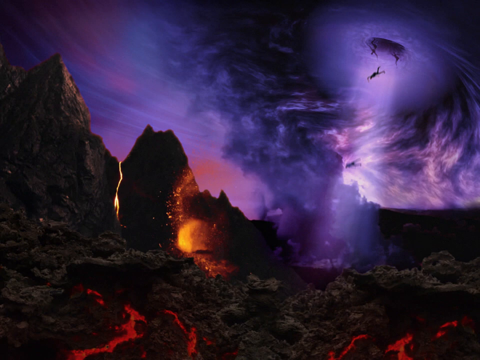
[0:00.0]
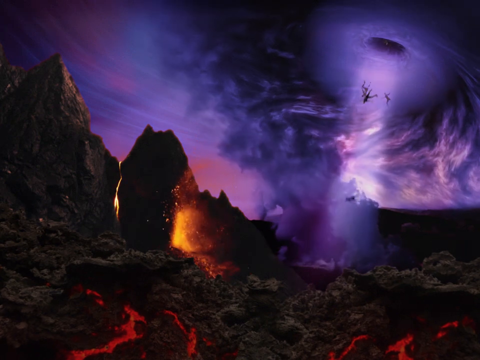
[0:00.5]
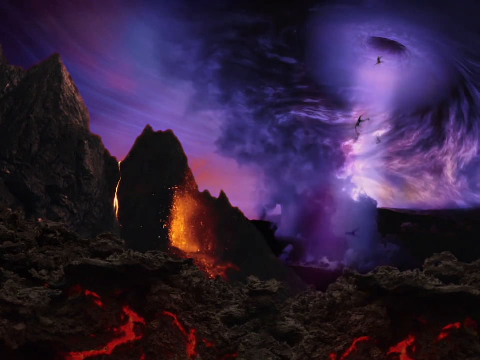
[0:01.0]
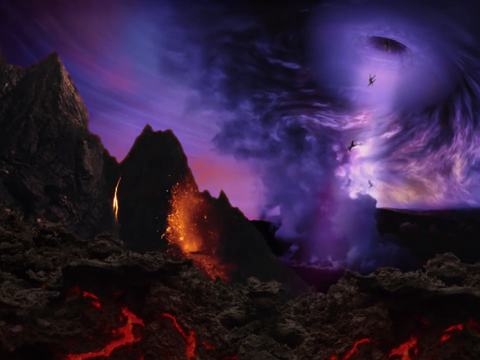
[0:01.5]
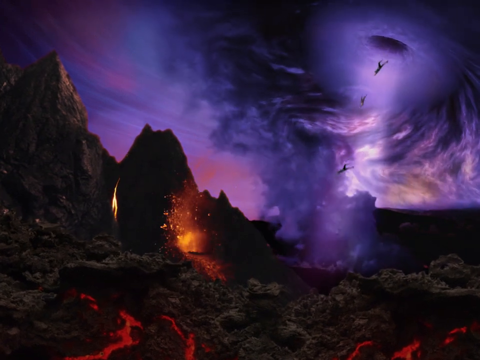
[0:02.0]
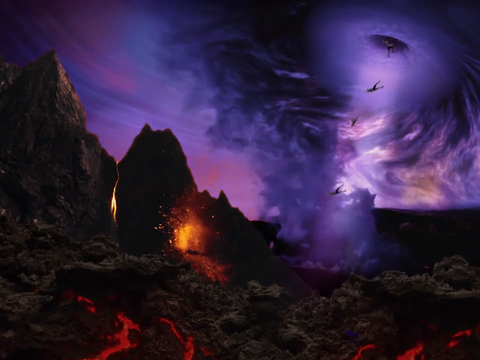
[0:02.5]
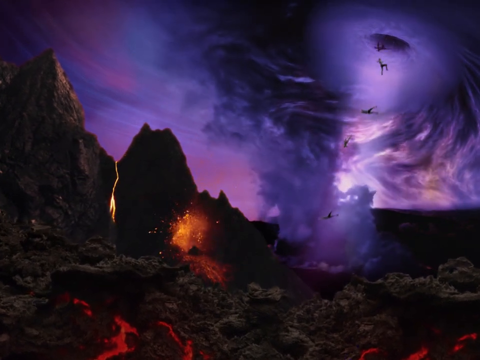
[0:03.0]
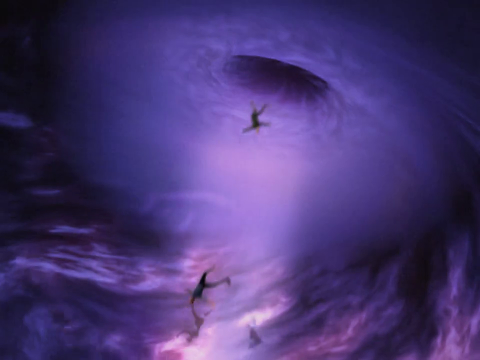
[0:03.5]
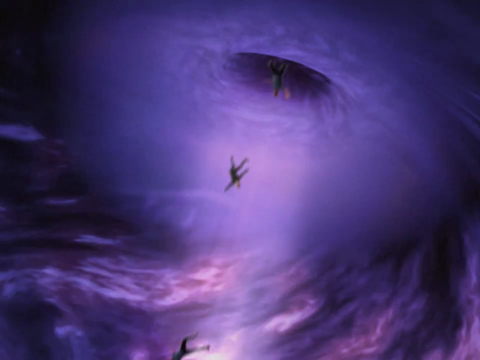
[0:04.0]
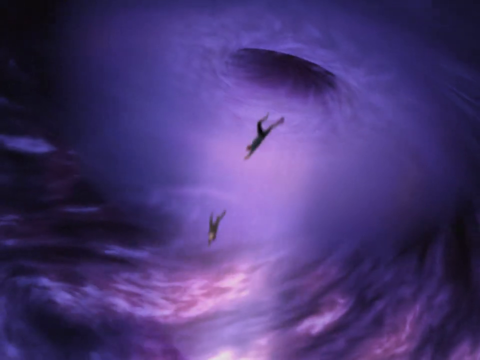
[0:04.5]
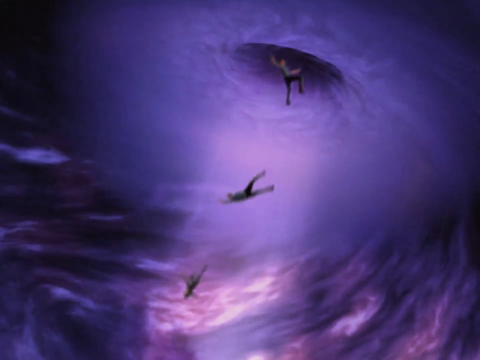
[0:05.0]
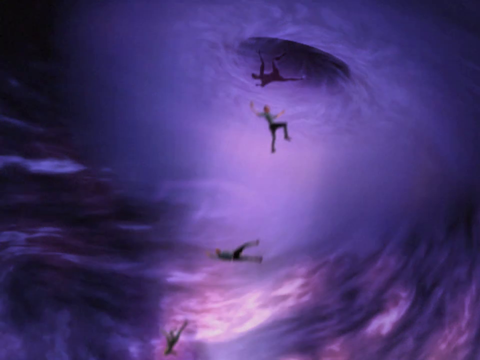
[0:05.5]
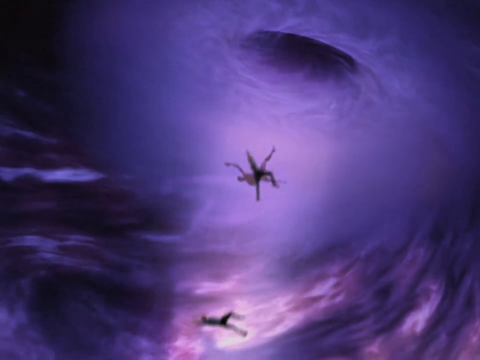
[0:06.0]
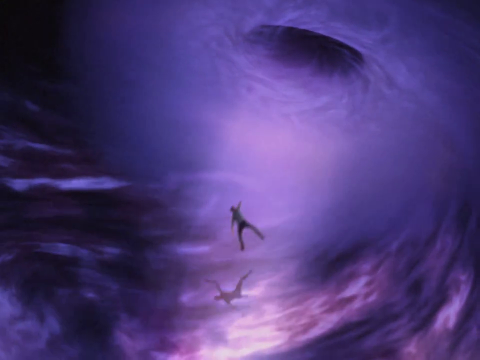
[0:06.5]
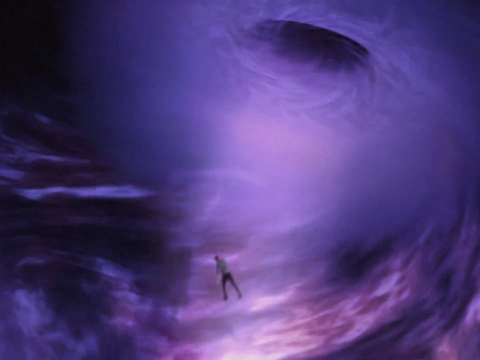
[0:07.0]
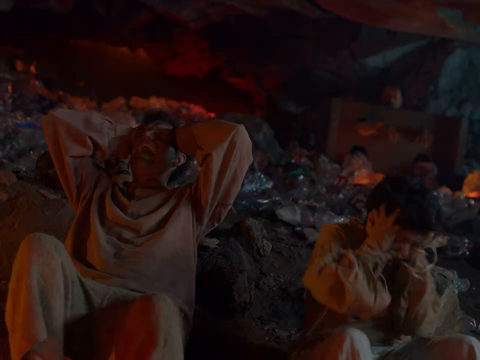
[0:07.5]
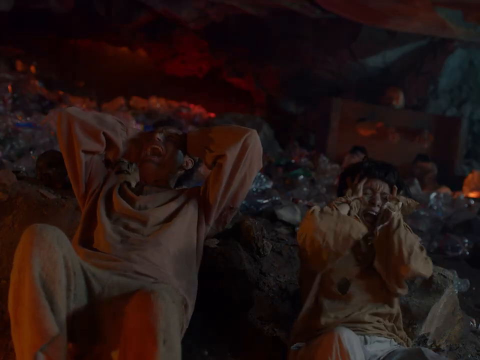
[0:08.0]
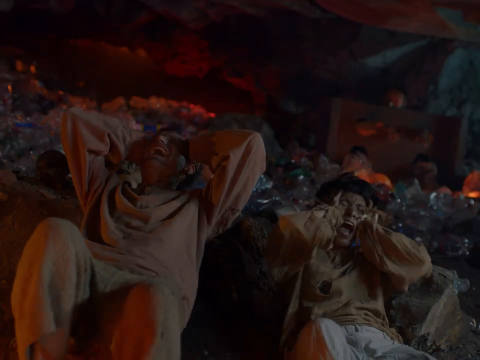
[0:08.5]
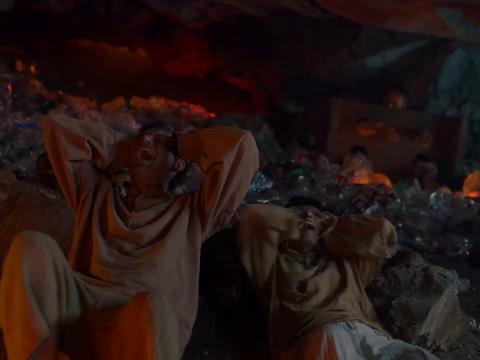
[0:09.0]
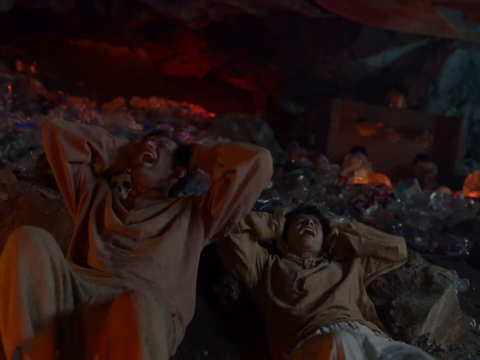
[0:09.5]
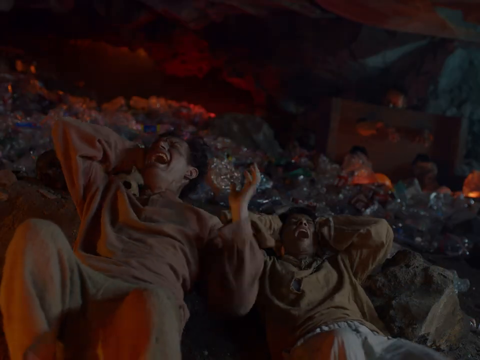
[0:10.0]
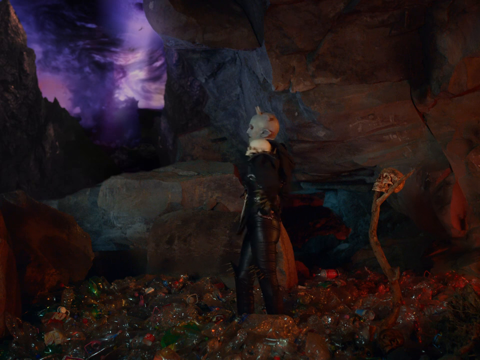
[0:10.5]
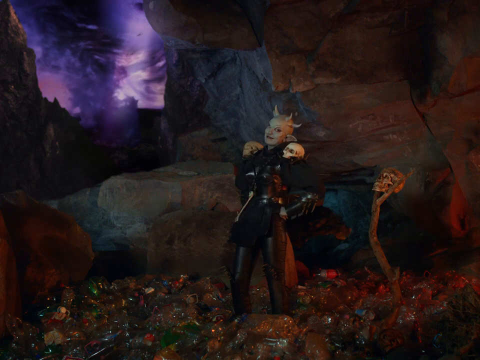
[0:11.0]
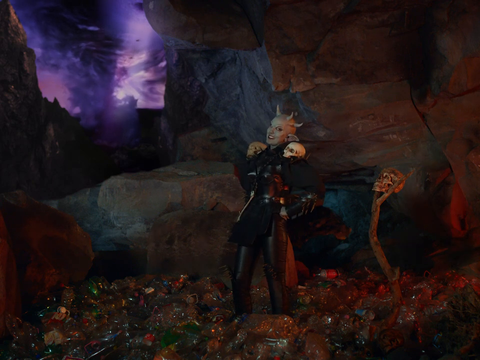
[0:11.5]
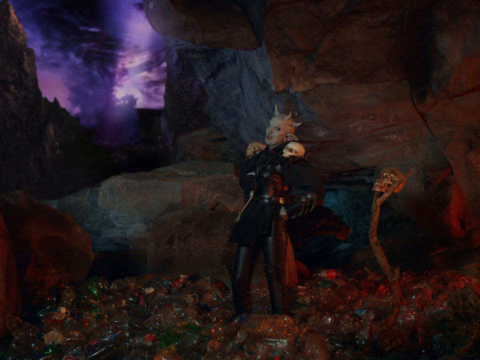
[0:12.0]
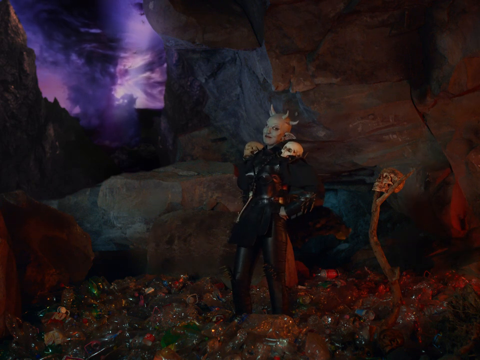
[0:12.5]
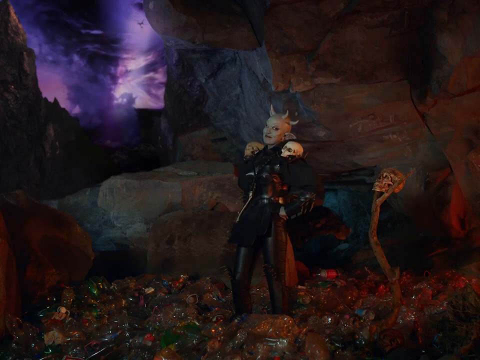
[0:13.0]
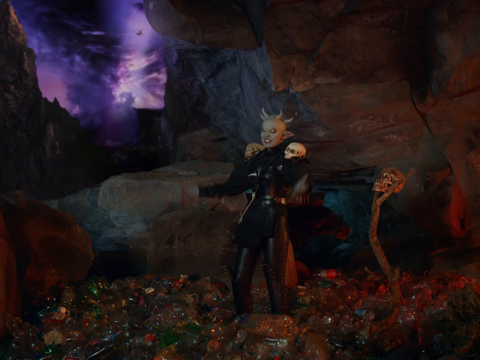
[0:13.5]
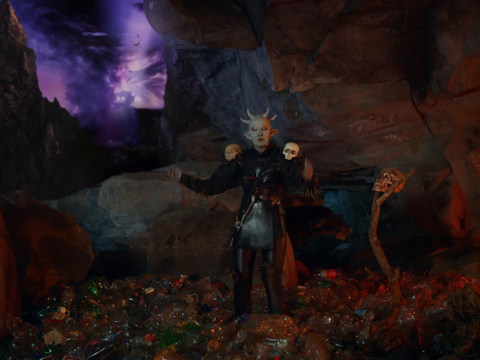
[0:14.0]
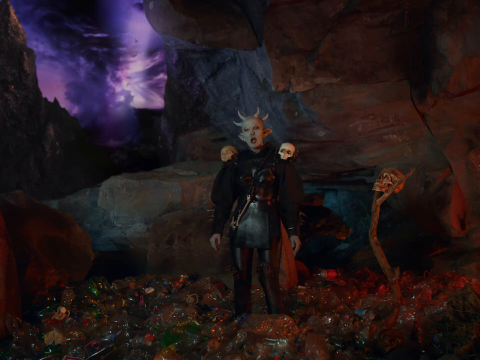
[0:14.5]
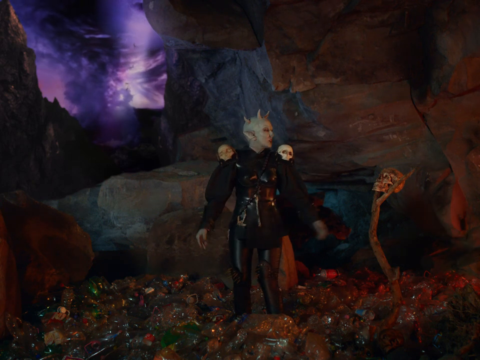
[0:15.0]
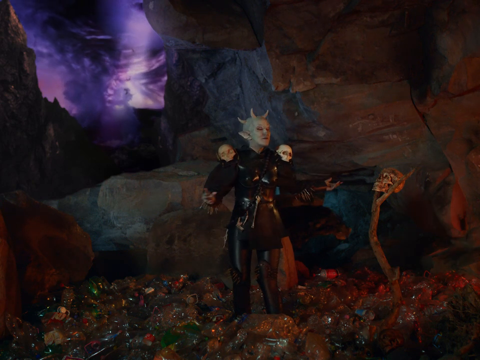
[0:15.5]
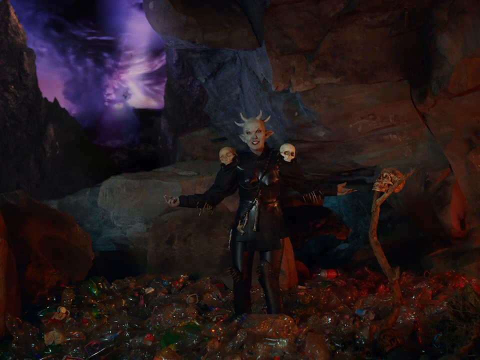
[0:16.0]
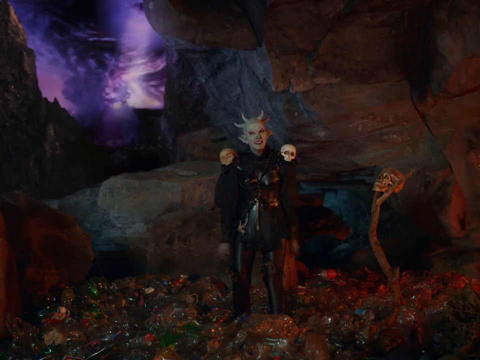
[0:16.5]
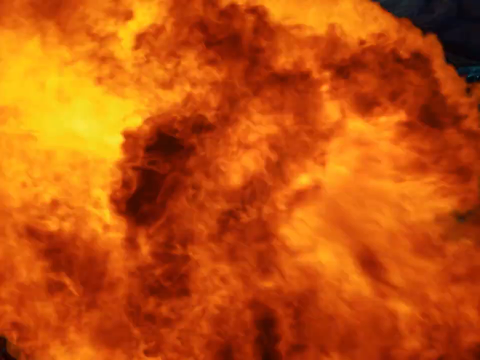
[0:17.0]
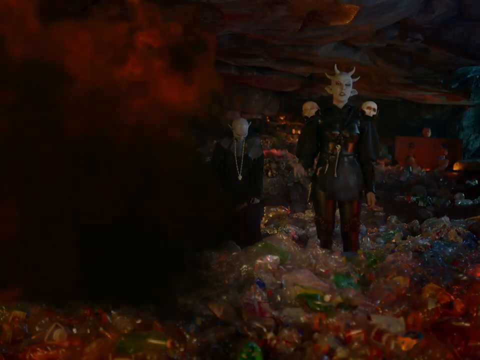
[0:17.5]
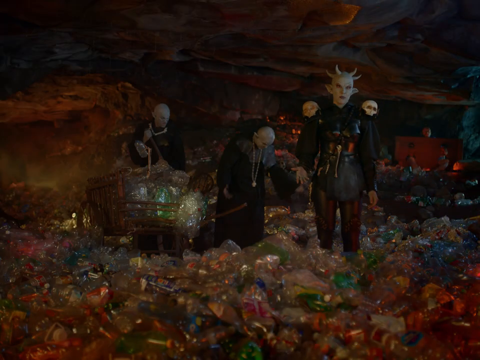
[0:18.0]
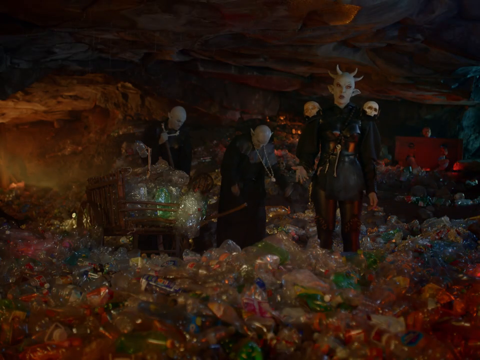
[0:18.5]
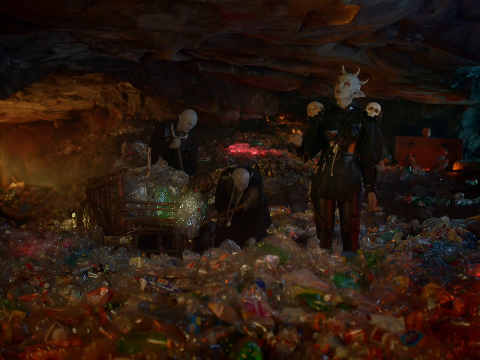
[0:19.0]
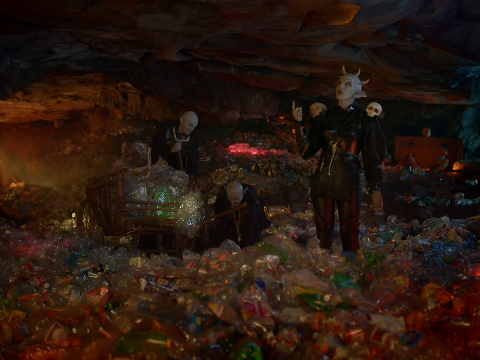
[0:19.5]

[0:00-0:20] A purple sky is toward the top right of the image, almost filling the whole right diagonal, while the bottom left part appears to be a rock face and foliage. It is dark, at night, and in between the rock face there is an orange glow that looks like an entrance to a tunnel or something. The sky is a swirl, almost like a twister, with colors ranging from purple to lilac to black. There is a hole in the spiral, and people or creatures drop from the sky through it, quite a lot of them. The camera zooms into the hole and then shows these people lying on the ground in what looks like a cave. They wear loose, light brown clothes and are holding their heads and screaming; there are two of them in the image. The video then cuts to an alien-looking creature standing in what looks like something glass. There appears to be a Coke bottle on the ground somewhere in the back, so they could be standing in waste material.